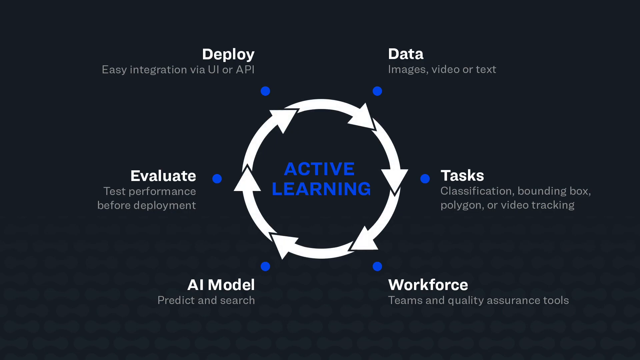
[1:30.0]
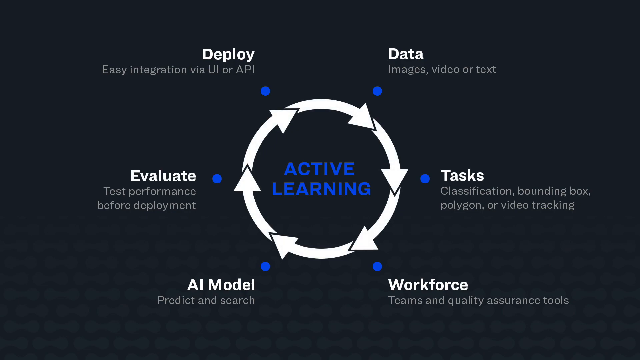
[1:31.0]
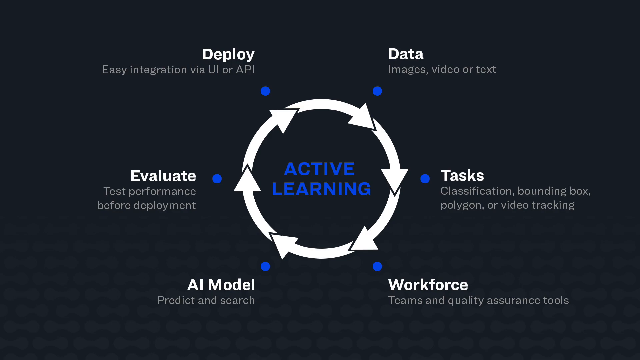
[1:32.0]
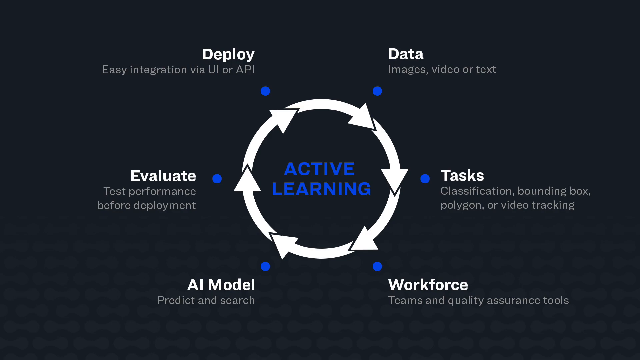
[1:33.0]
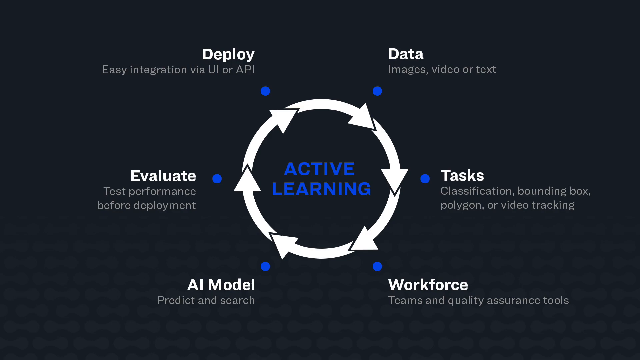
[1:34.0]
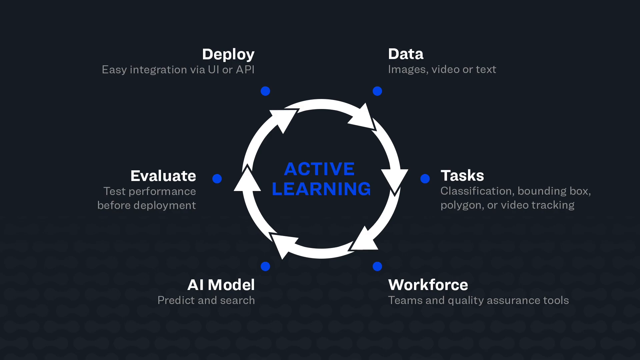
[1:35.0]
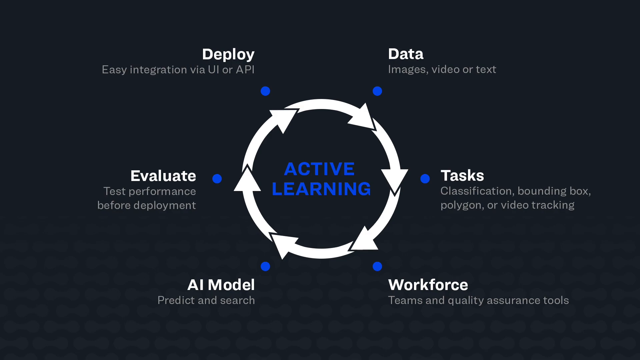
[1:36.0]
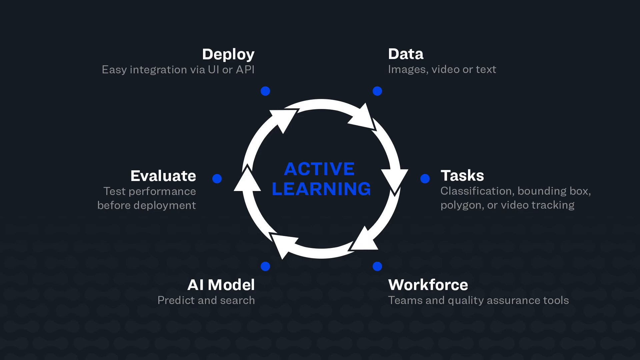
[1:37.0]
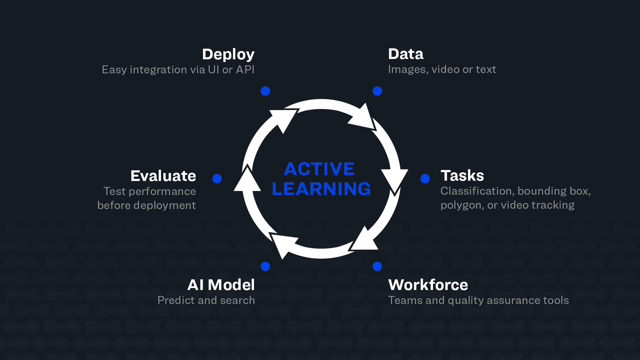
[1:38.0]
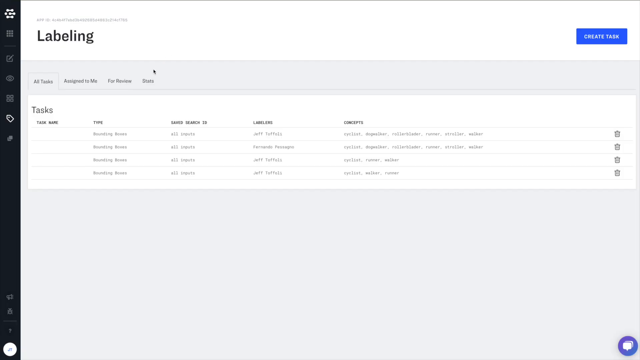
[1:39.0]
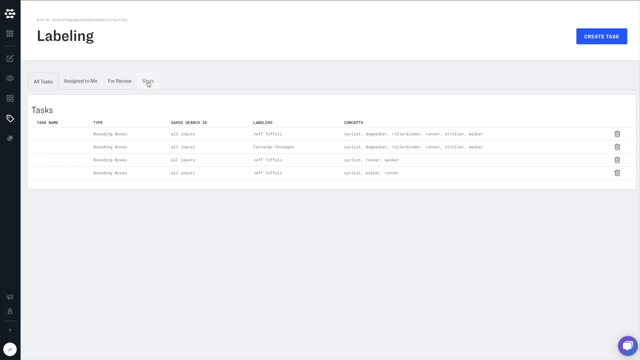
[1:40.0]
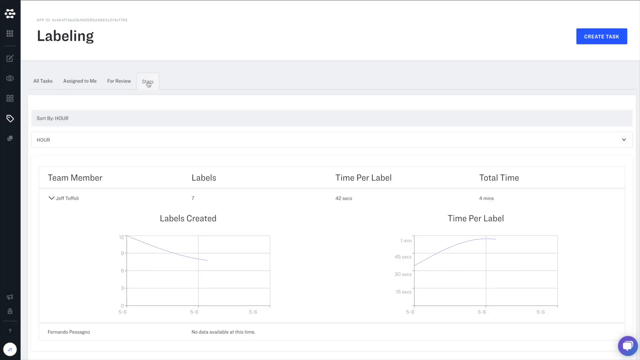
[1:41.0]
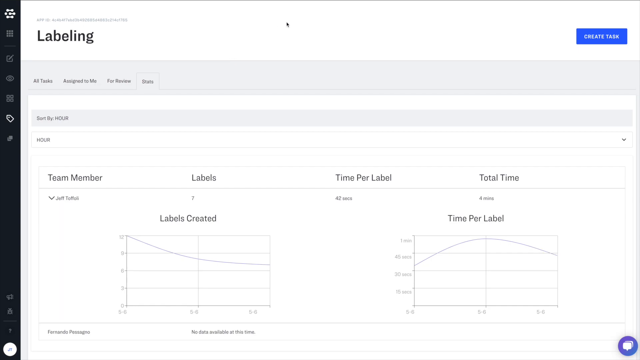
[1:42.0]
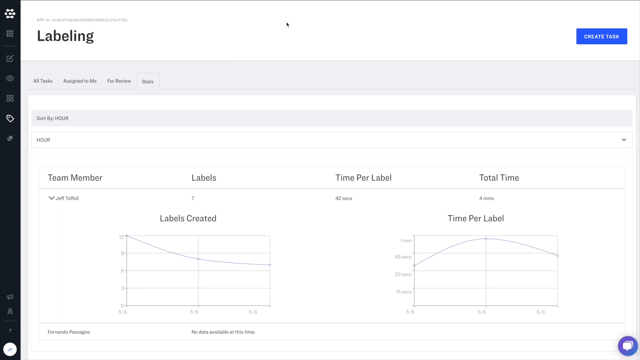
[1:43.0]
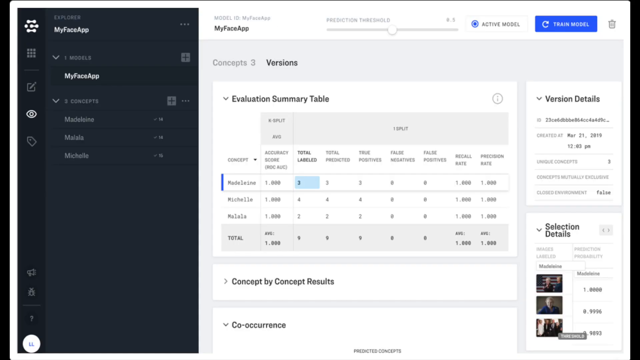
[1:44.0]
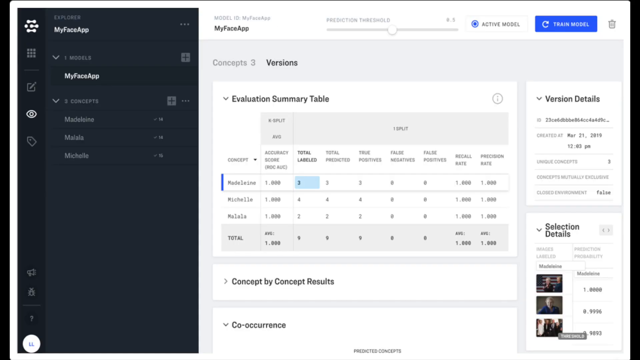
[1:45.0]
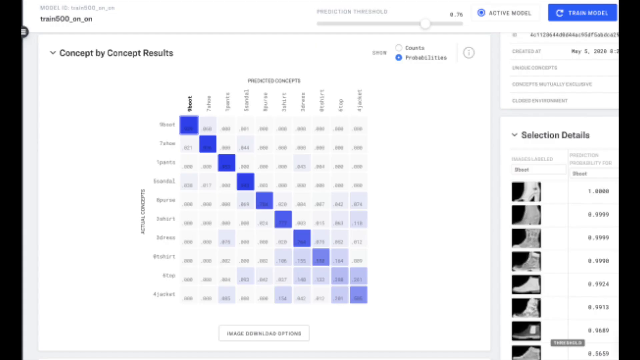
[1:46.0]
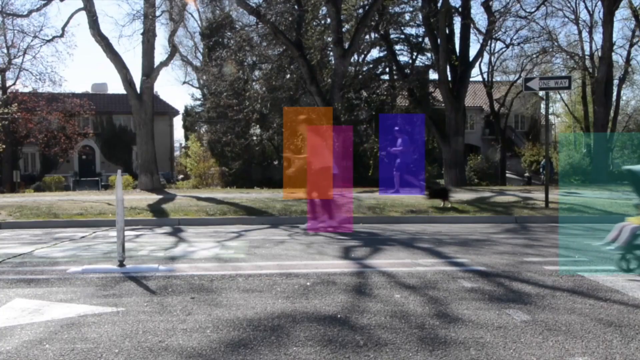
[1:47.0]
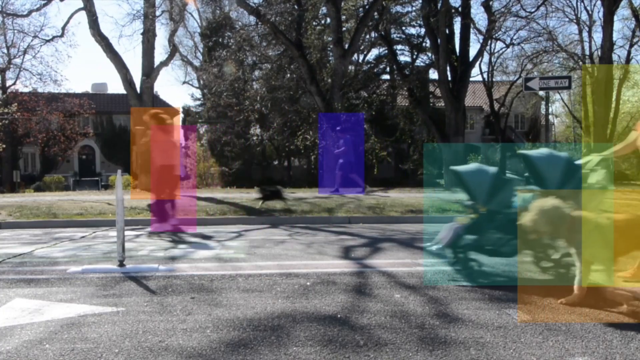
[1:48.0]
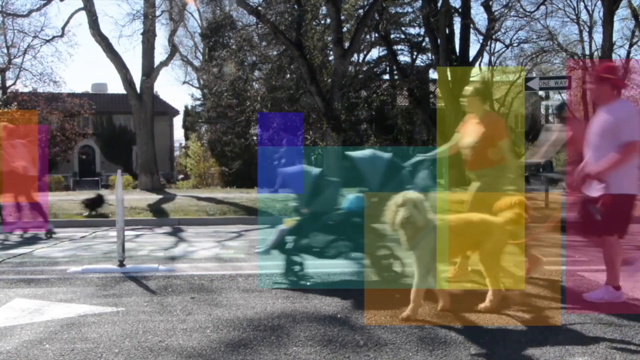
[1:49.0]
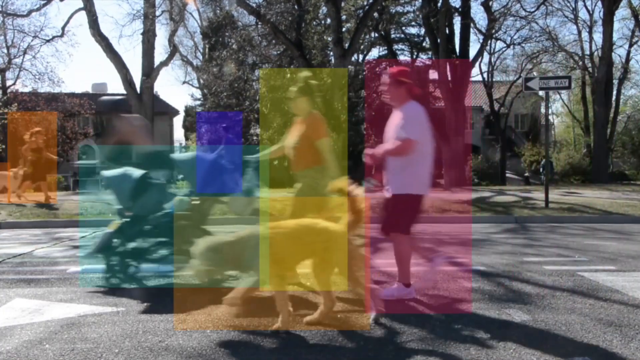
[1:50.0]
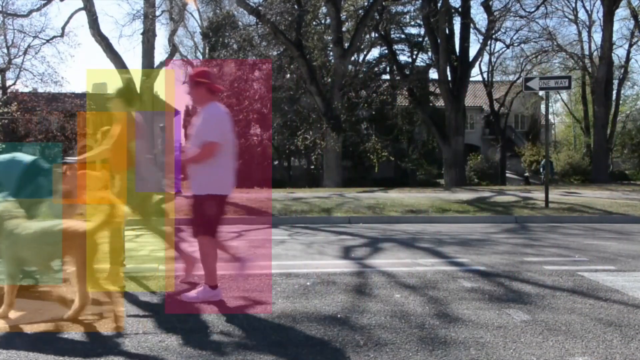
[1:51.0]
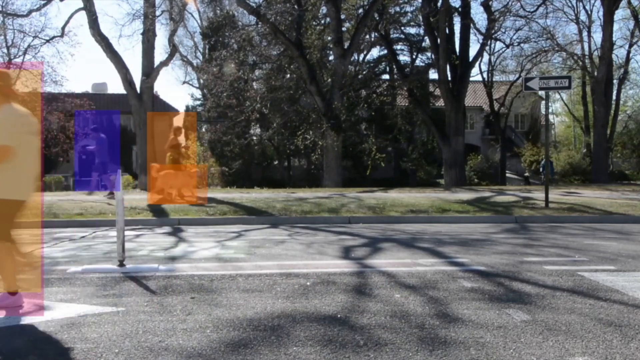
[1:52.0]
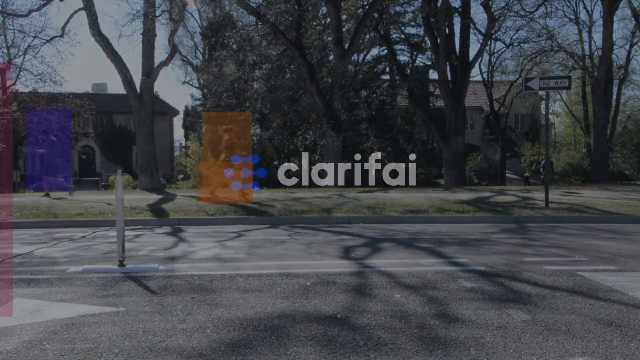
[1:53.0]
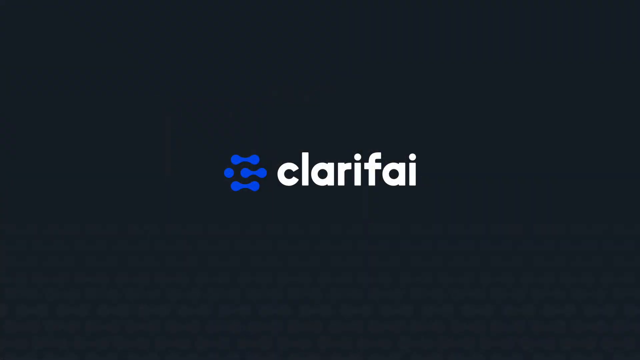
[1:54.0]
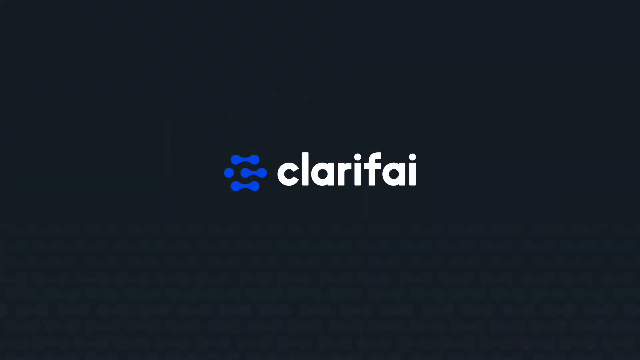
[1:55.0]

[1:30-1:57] On the black screen, the title "Active Learning" is in the centre, surrounded by a white circle with arrows around it. Around this circle are blue dots, each with a title and description next to it. The top left reads "deploy easy integration via UI or API"; the centre dot on the left, "evaluate test performance before deployment"; the bottom left, "AI model predict and search"; the top right, "data, images, video or text"; the centre dot on the right, "tasks, classification, bounding box, polygon or video tracking"; and the bottom right, "workforce, teams and quality assurance". Then a white page appears entitled "Labelling", with a blue box at the far right saying "Creative Task", and under "All Tasks" the tasks are listed by type, along with name search, labeling and concepts. The screen changes to a stats tab showing start by hour, then the team members, labels, times per label and total time, with a graph for labels created and a graph for times per label. Next, the My Face app appears with an evaluation summary table and a concept-by-concept results page. Then the video of the park returns, showing the people highlighted in their colours as they go about their business. The video concludes with the clarifai title page and logo.